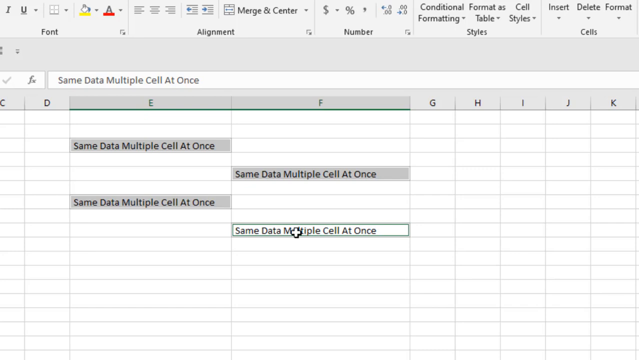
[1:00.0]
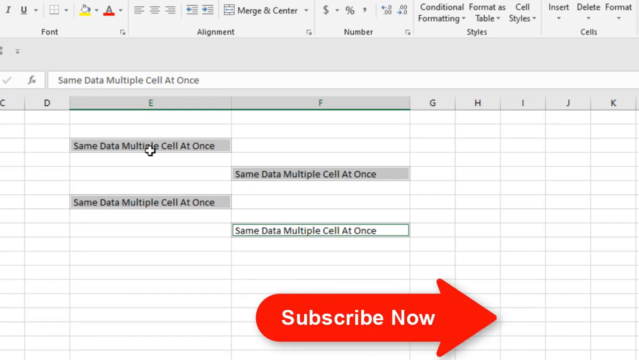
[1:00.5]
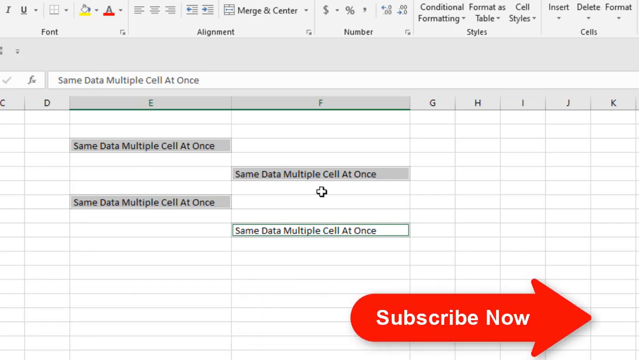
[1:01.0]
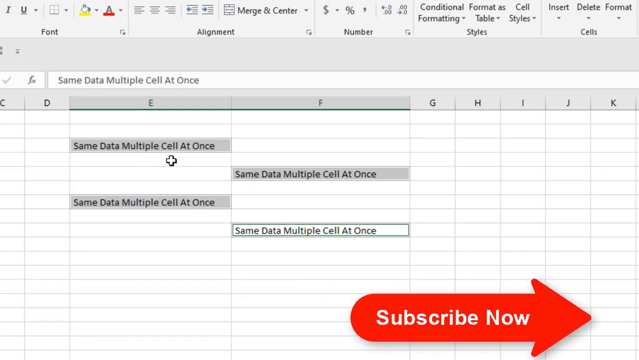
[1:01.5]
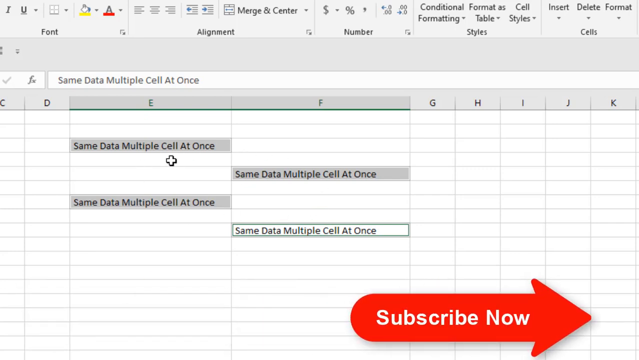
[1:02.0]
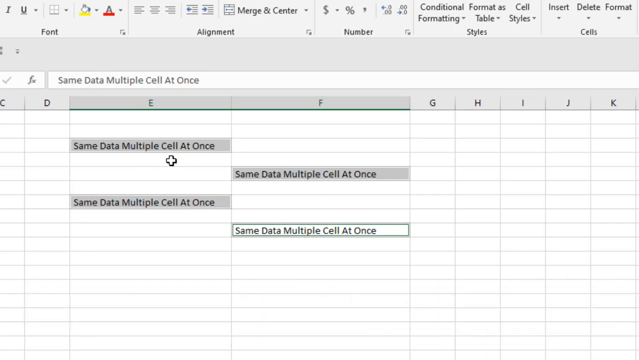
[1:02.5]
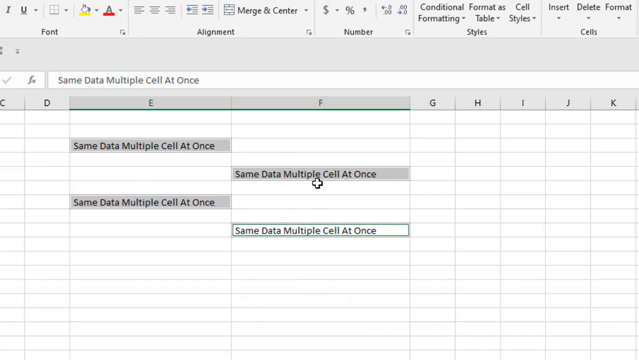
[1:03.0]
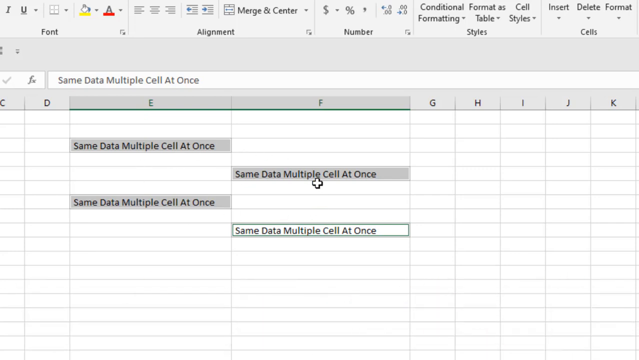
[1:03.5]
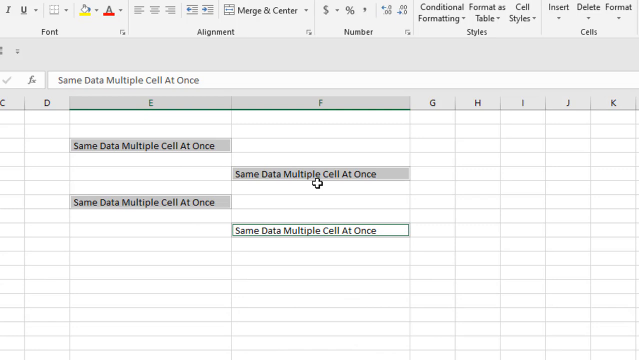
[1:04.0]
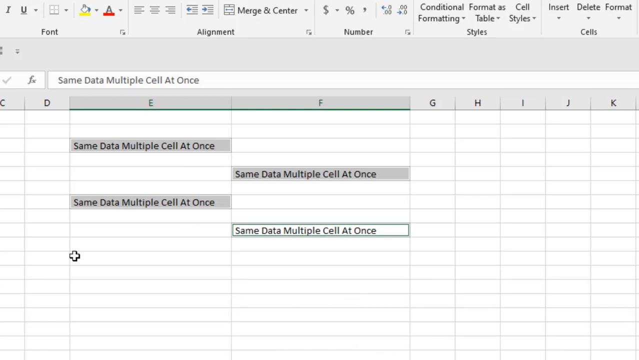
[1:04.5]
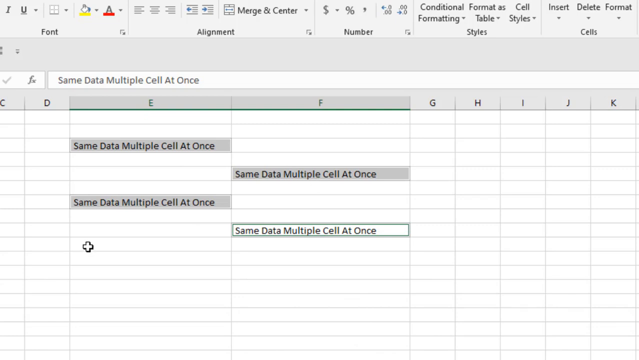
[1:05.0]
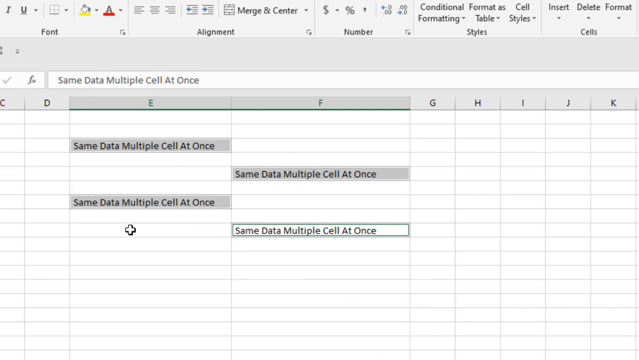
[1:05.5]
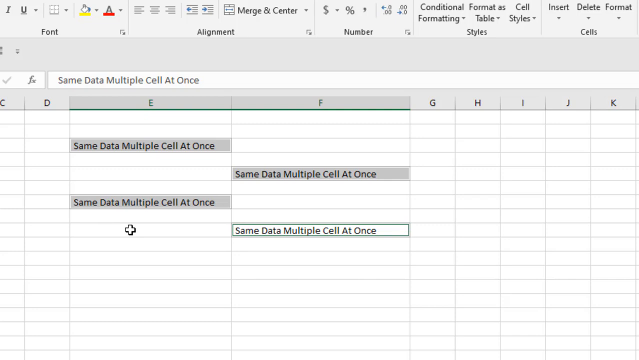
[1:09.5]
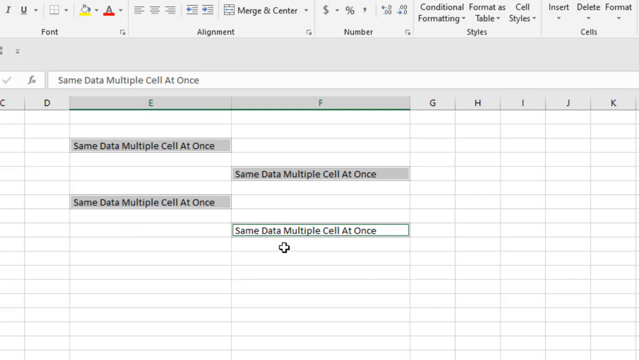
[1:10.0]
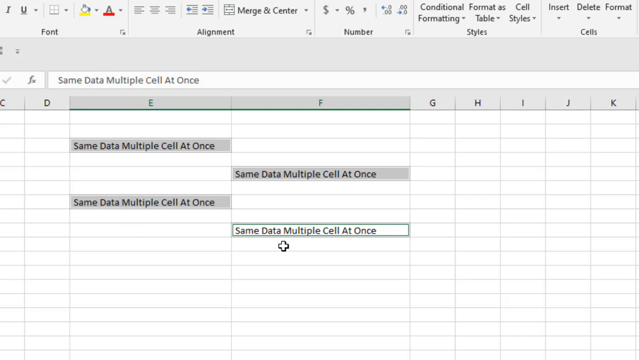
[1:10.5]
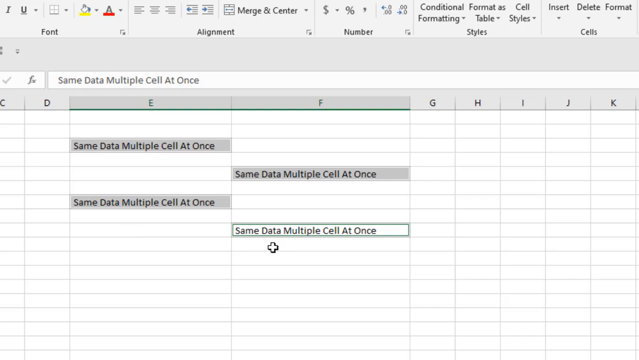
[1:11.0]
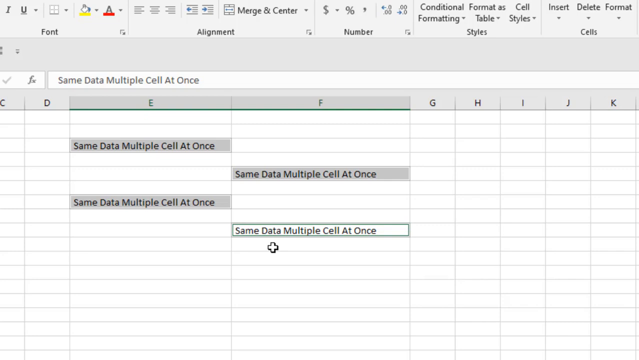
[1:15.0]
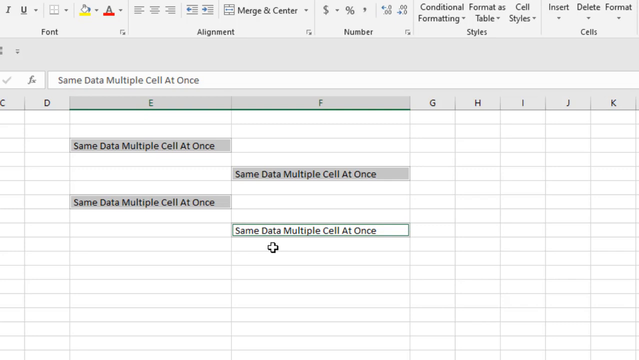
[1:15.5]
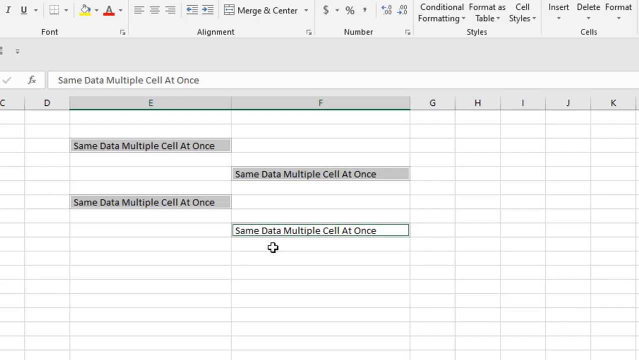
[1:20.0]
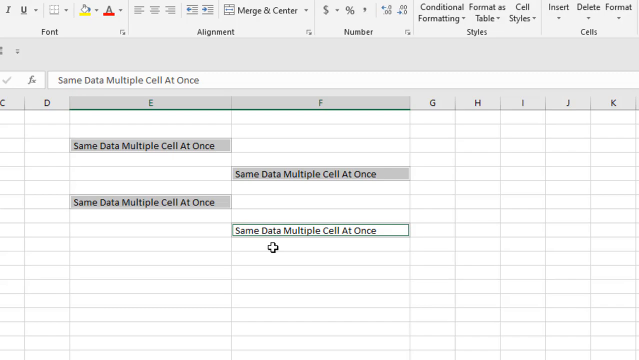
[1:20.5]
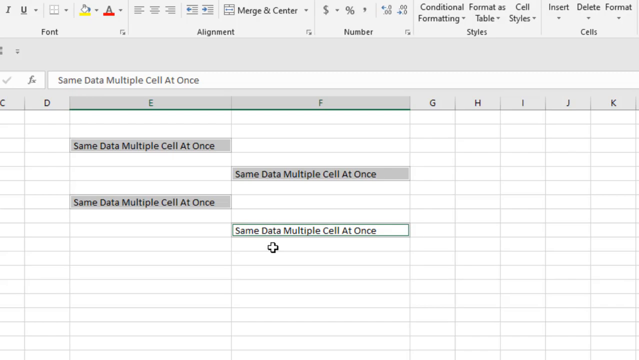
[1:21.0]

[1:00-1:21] The person demonstrates typing into the columns, and the text "same data multiple cell at once" is written in both column E and column F, while columns G, H, I, J, and K are empty. Column D is on the left-hand side, and at the top are merge and center, alignment, font, numbers, styles, and cells. An arrow passes across the screen with the words "subscribe now".